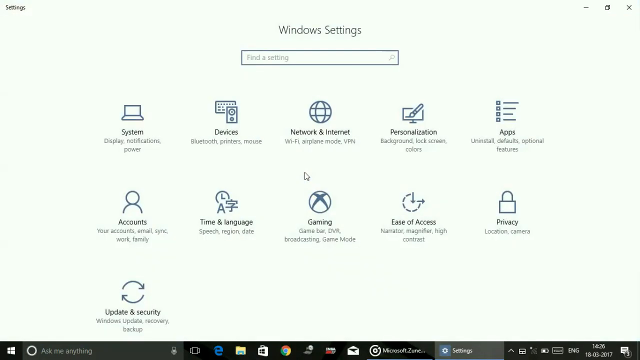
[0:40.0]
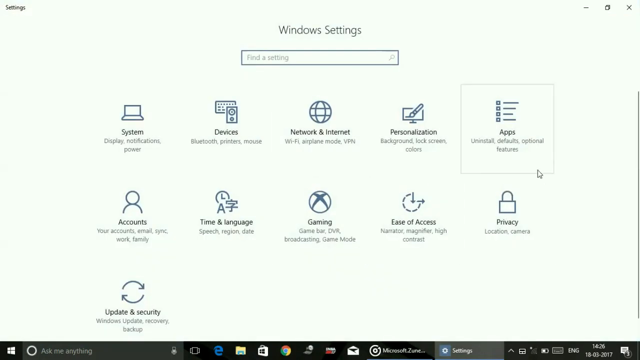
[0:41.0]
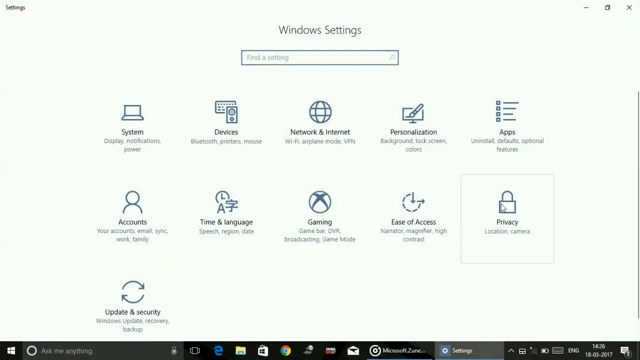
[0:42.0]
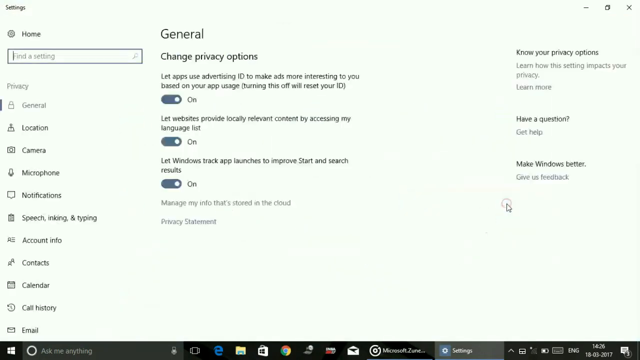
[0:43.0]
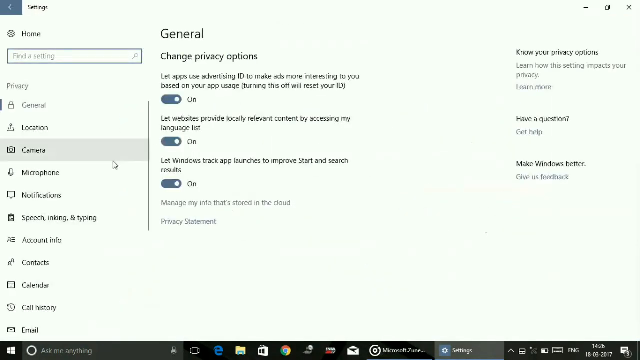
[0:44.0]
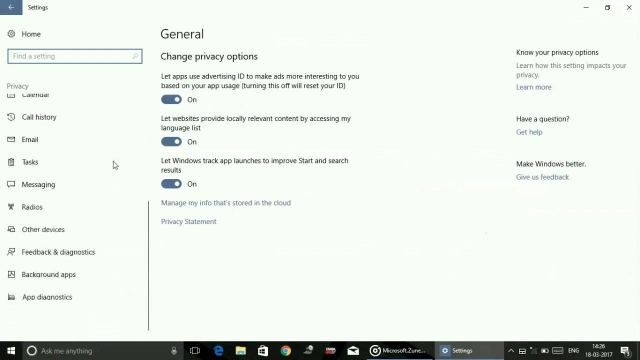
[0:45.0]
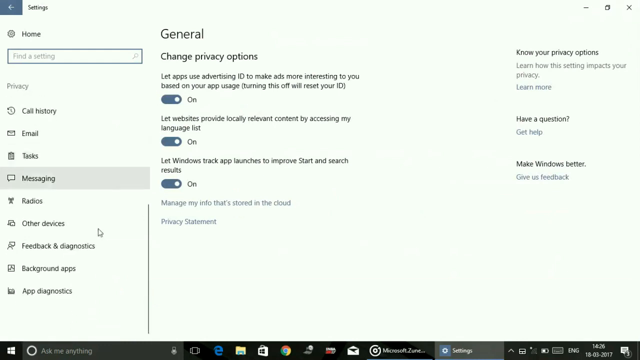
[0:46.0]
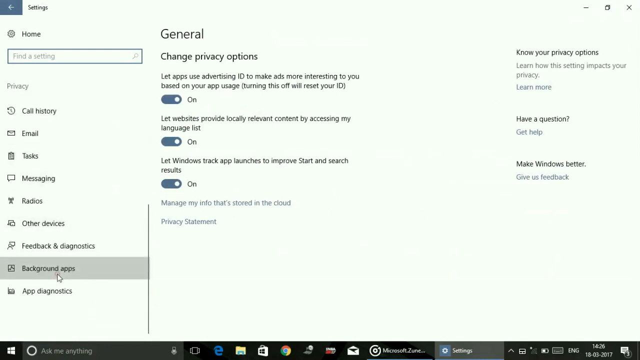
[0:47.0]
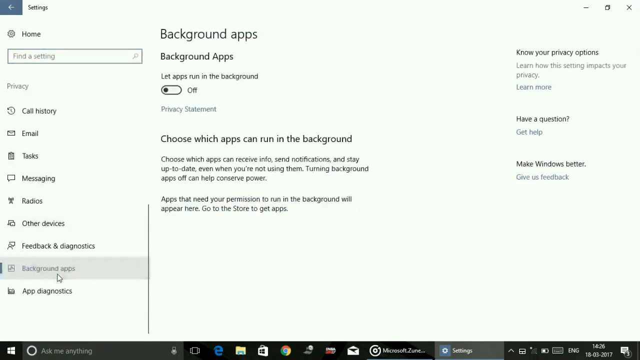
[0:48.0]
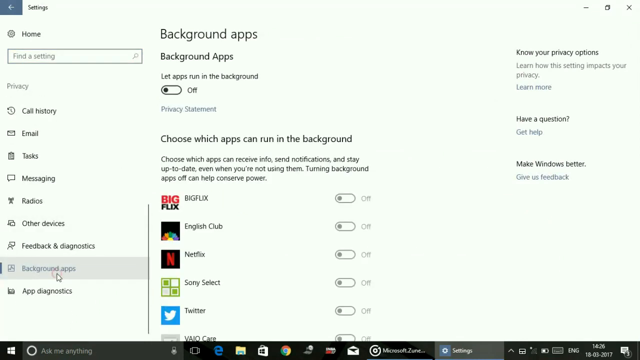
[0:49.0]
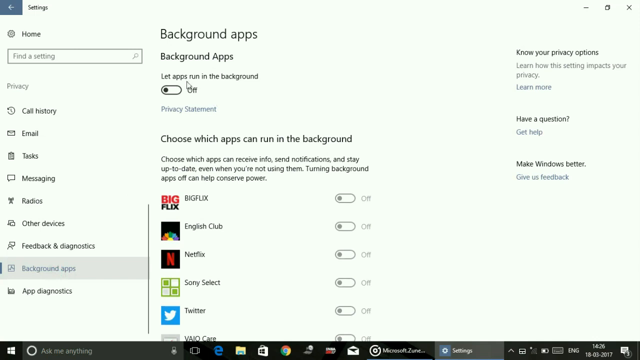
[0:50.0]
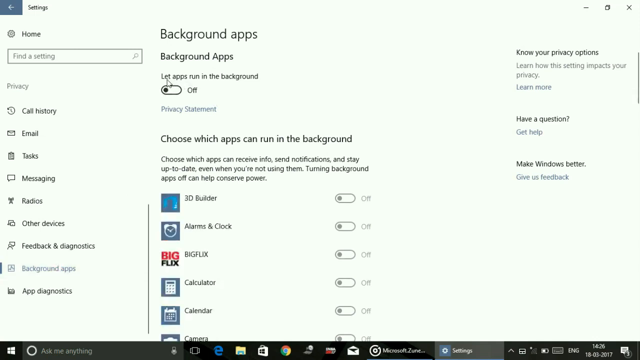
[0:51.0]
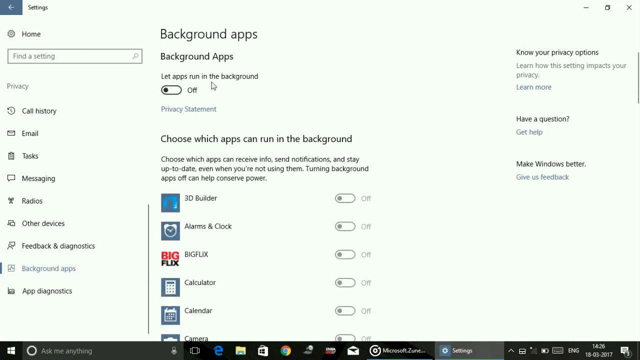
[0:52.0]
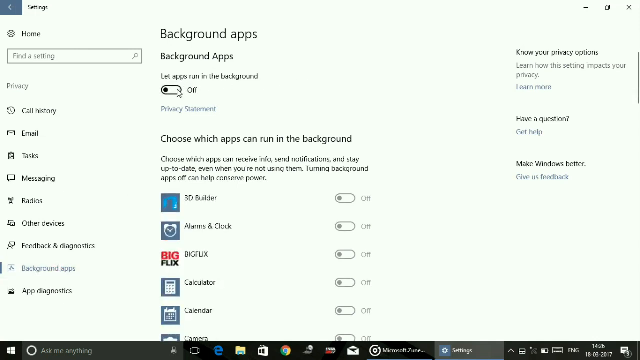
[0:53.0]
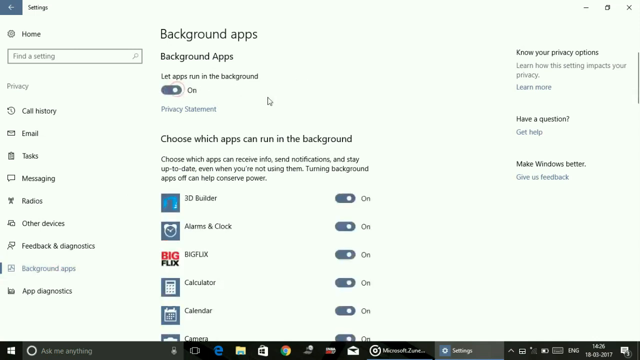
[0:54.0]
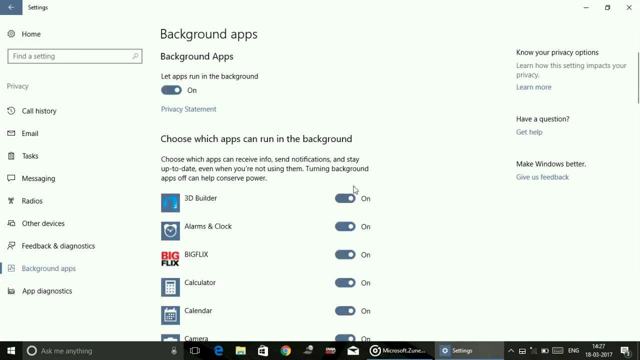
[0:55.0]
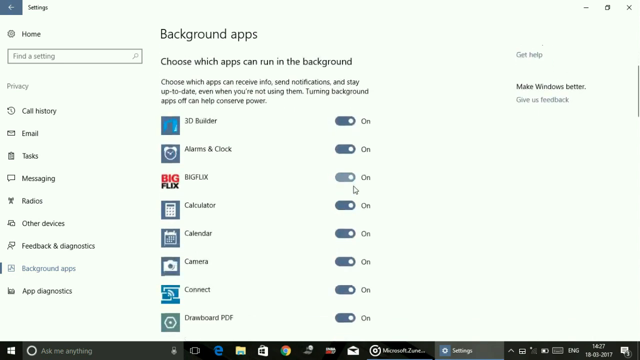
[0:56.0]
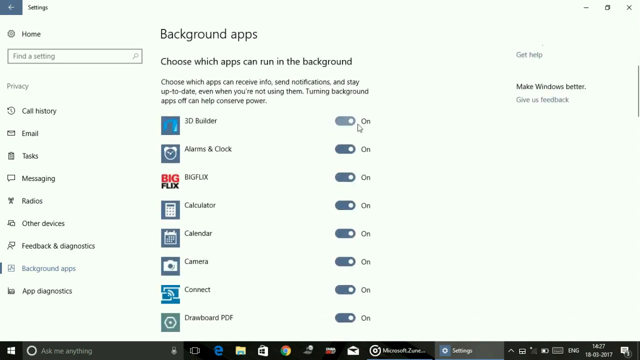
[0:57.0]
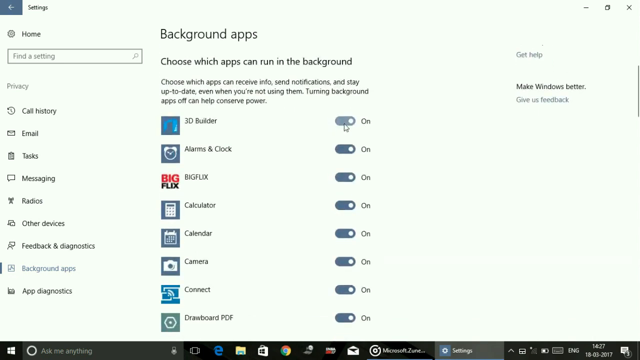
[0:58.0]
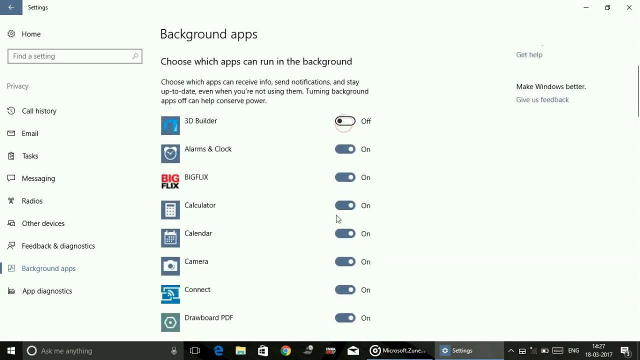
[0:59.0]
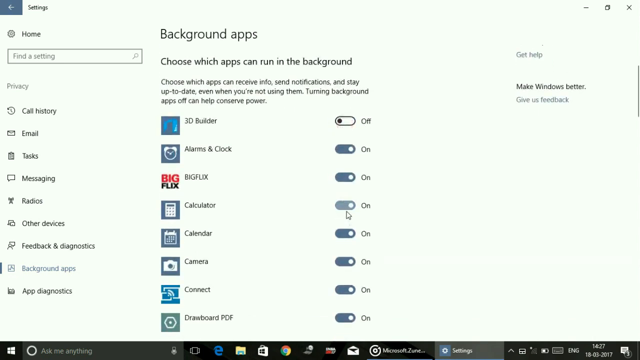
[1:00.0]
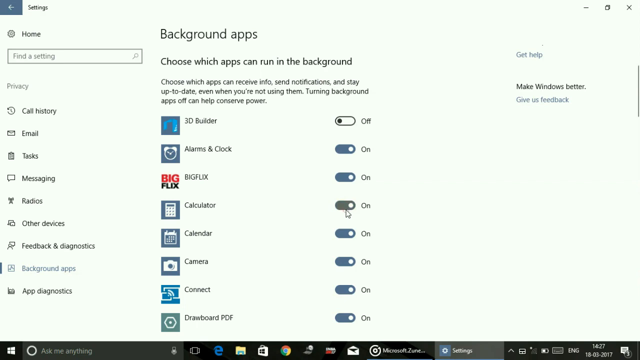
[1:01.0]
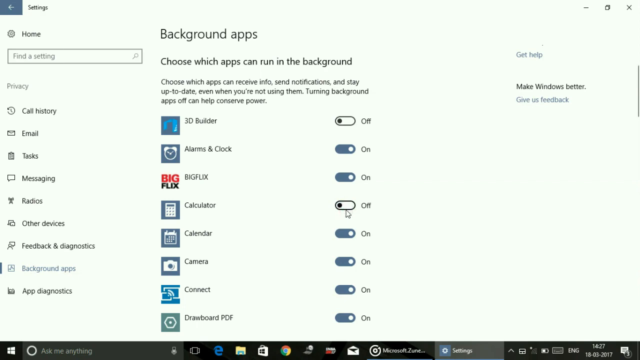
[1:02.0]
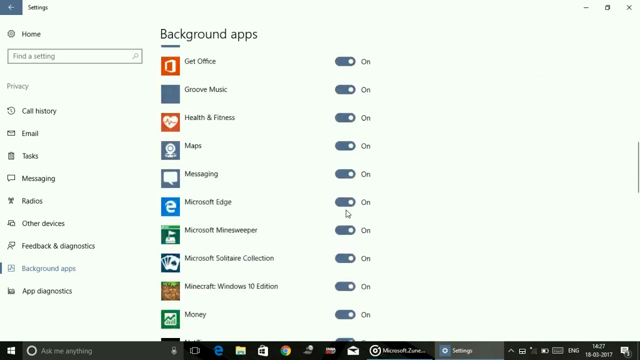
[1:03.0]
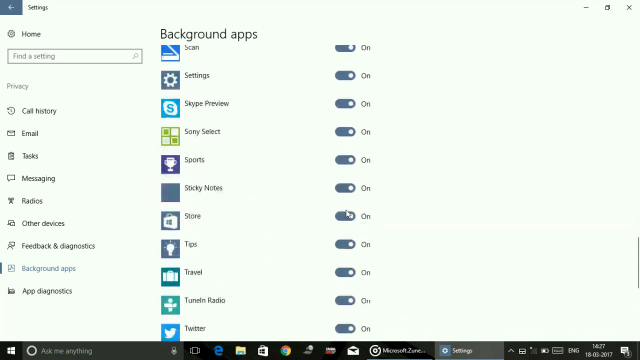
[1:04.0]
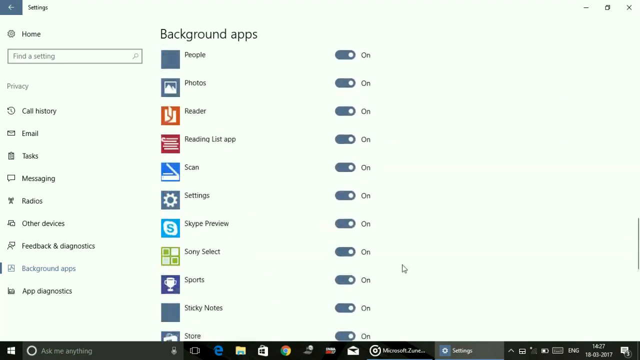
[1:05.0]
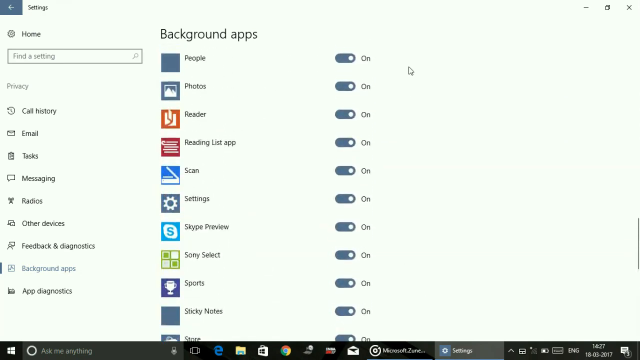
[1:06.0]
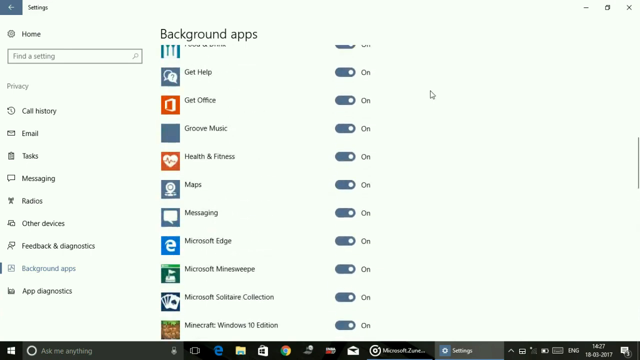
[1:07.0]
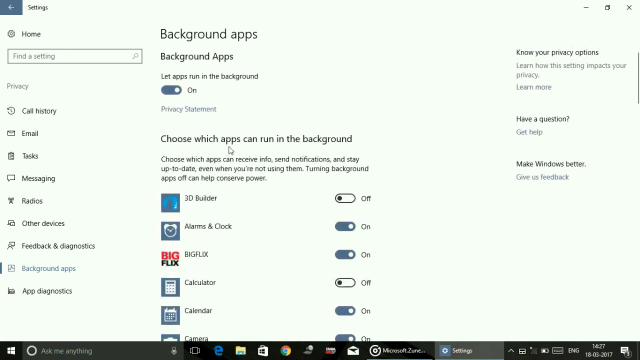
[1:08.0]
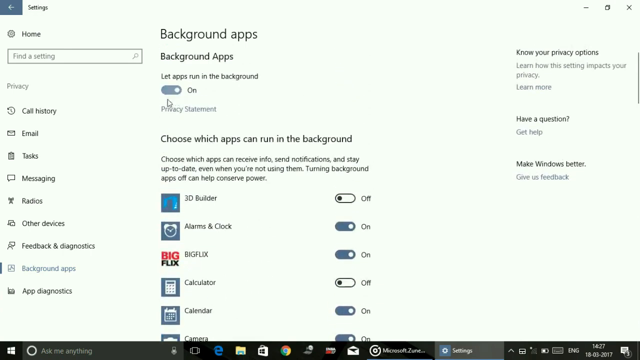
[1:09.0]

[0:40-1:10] The Windows 10 Settings window is open at the "general" submenu, with the mouse cursor hovering over the camera setting. The cursor then goes to "background apps" and clicks on it. The setting "let apps run in the background" is clicked to "on." The cursor then seems to switch off certain apps for no apparent reason: "3D builder" and "calculator" are switched to "off." The window has a white background with black letters. The shot is just the Settings window and the cursor moving to change settings, a screen capture of the Windows 10 PC being operated by an unseen person, with no people, animals or other living things present.